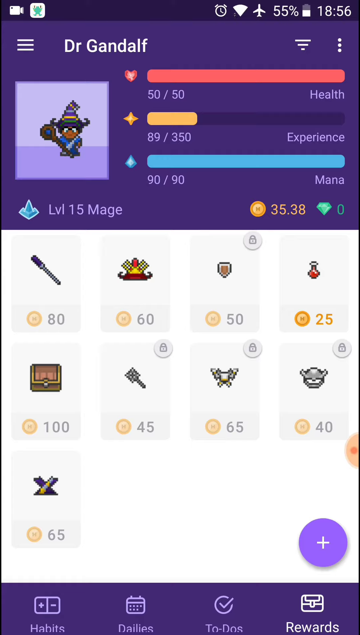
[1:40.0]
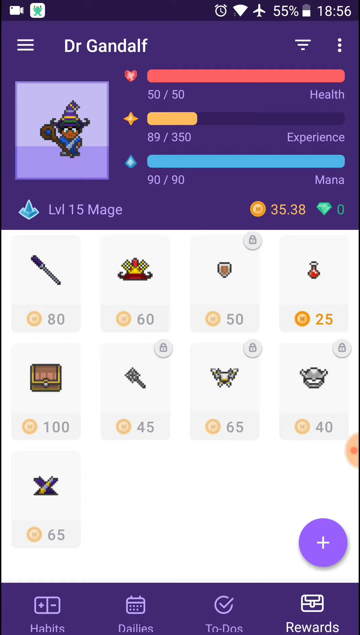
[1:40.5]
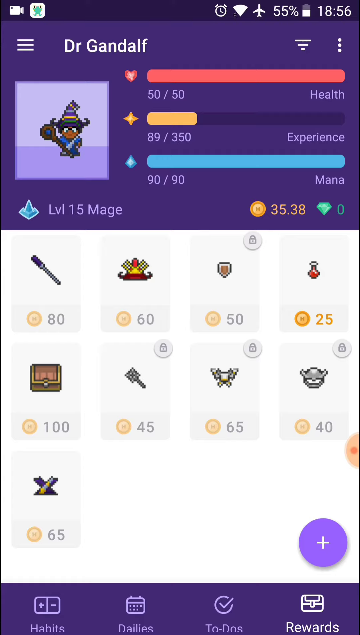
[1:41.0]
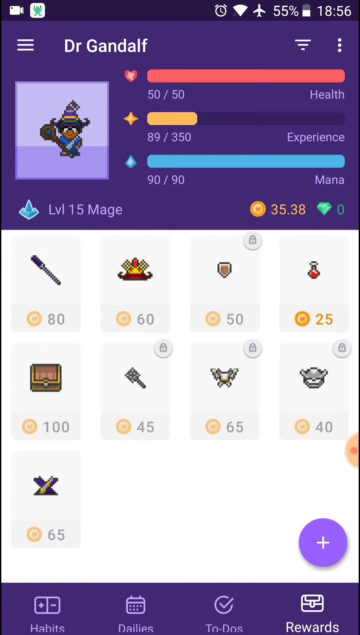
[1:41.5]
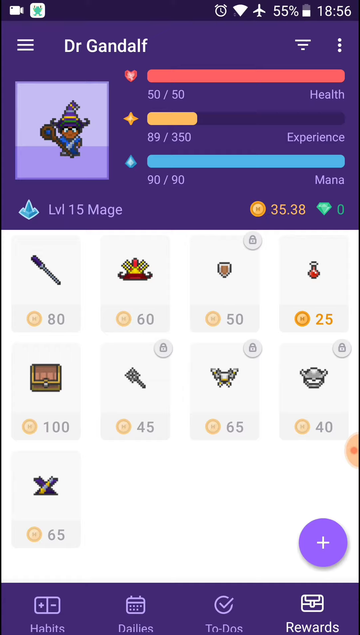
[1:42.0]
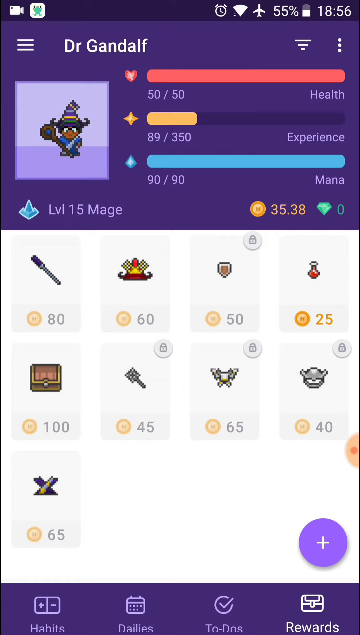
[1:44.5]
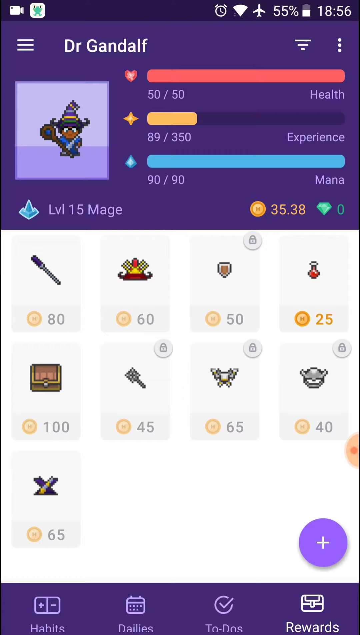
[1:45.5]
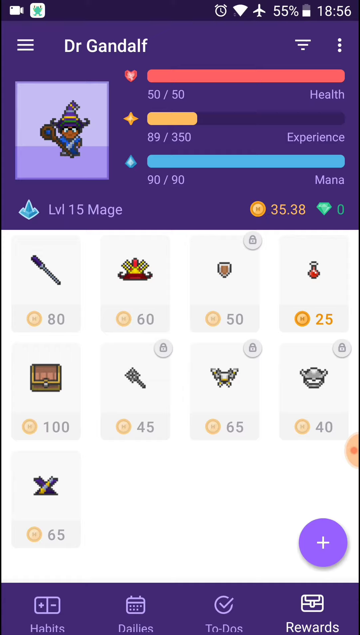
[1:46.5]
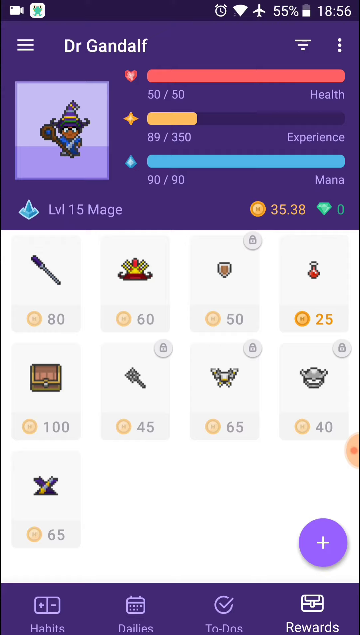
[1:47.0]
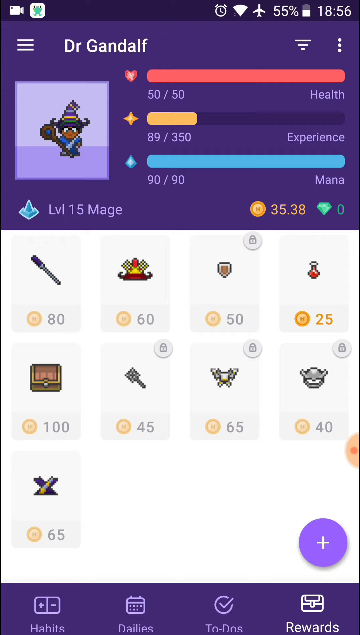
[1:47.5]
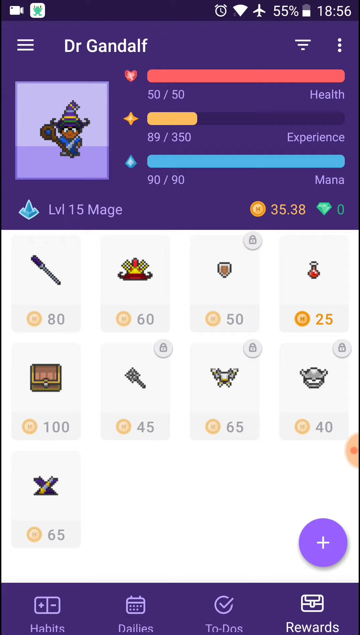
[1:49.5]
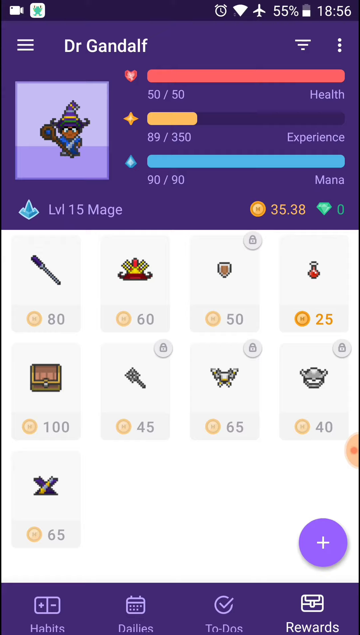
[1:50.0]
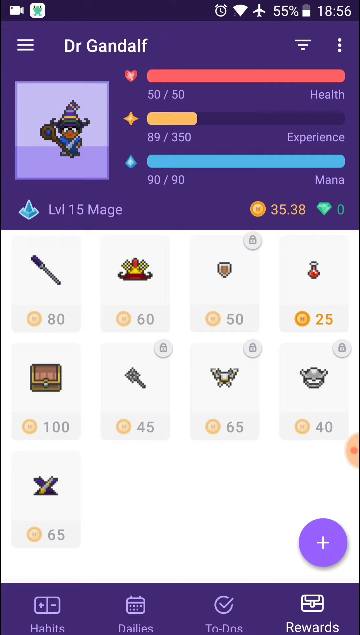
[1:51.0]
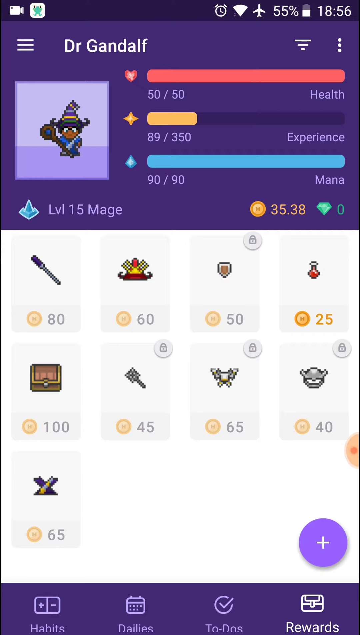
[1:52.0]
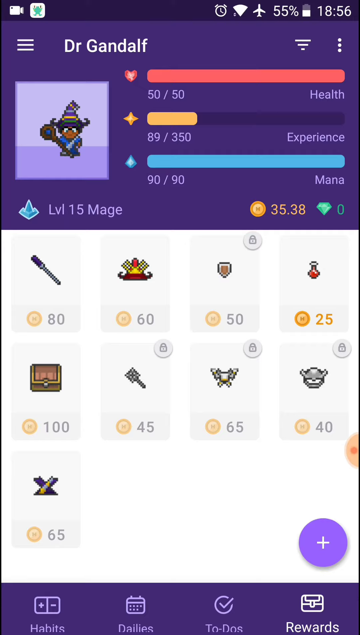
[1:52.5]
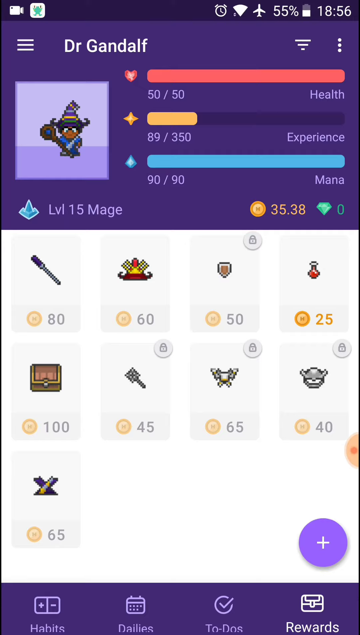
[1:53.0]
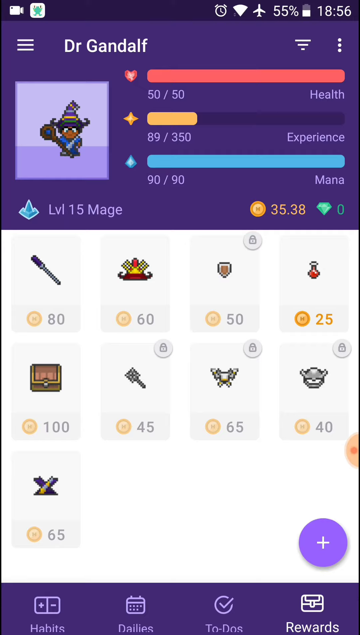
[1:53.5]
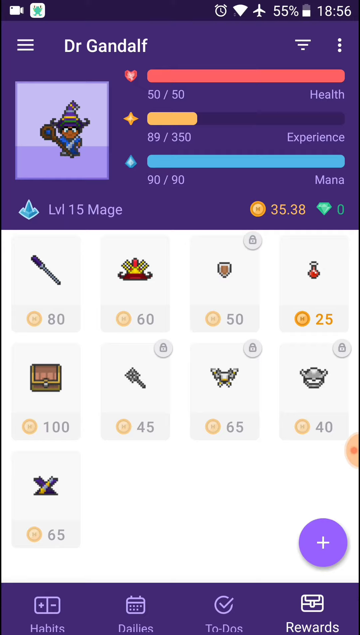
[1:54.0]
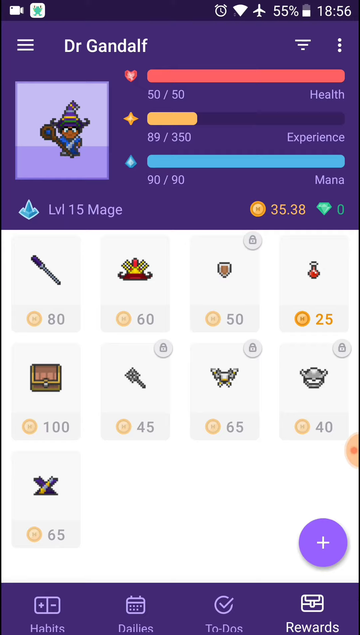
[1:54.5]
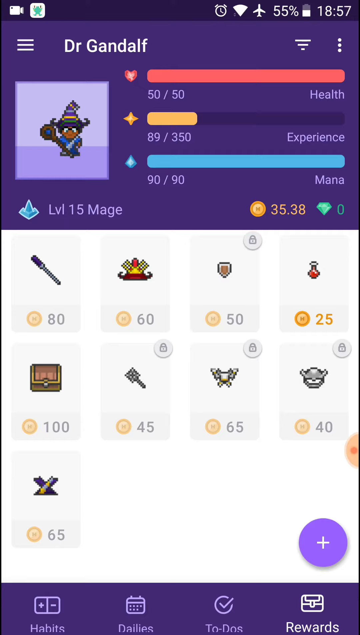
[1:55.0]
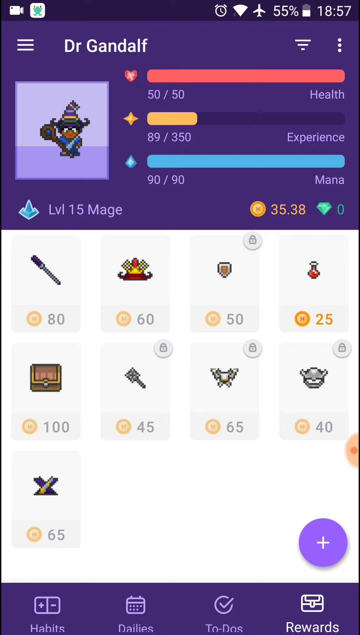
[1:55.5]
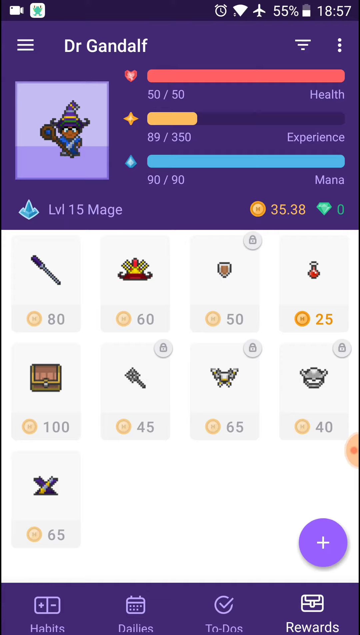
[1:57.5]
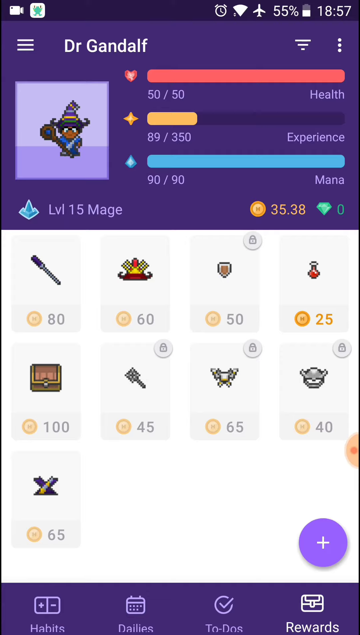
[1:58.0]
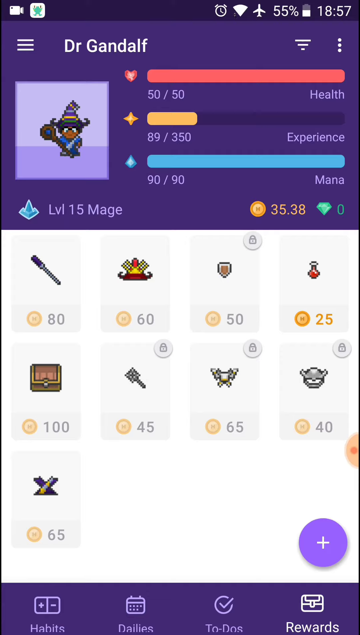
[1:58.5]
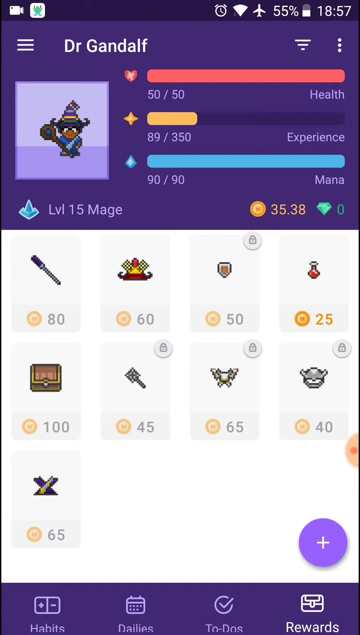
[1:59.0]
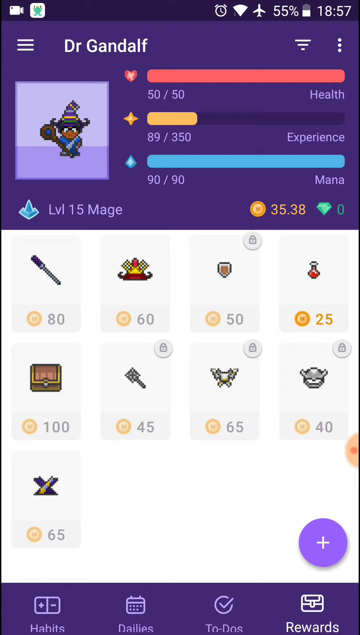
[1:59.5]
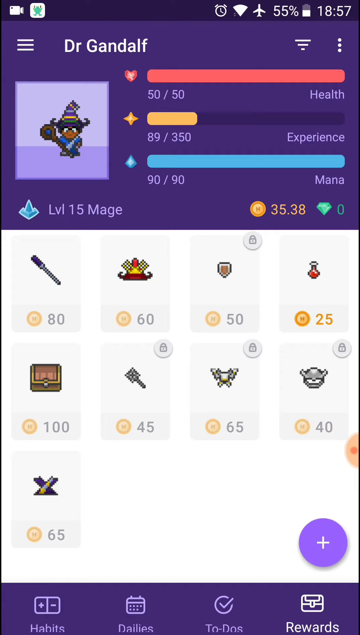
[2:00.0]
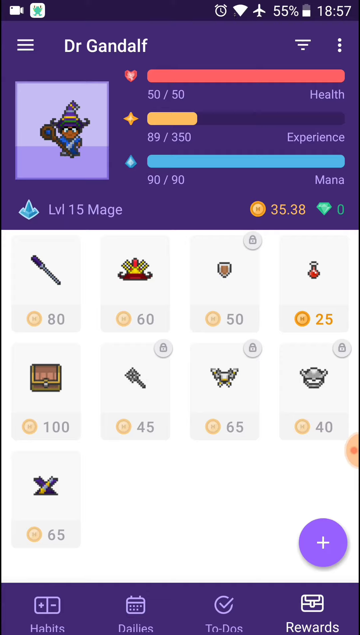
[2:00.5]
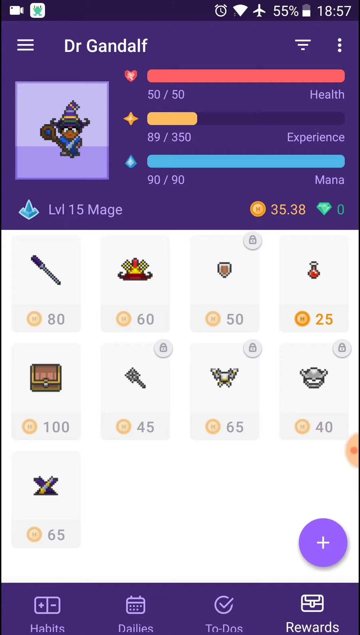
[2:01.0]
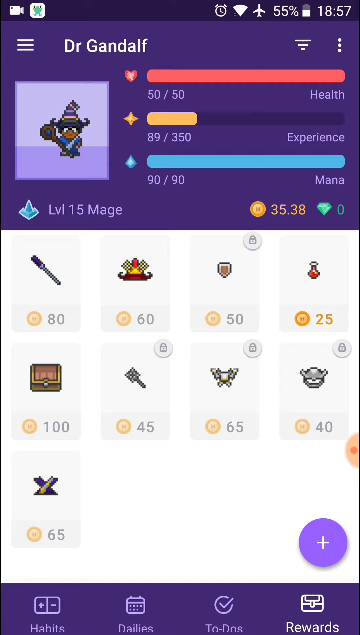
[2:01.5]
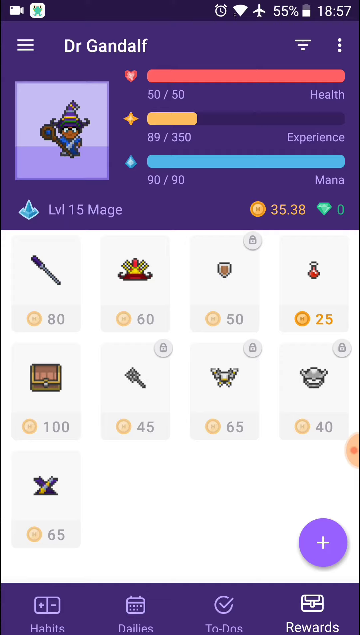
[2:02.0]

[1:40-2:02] The user remains idle on the page showing the character Dr. Gandalf and his stats. His health bar is full at 50 of 50, his experience is 89 out of 350, and his mana, his magical power, is also full at 90 of 90. In the top left corner is a picture of the wizard; his face cannot really be seen, but there is what looks like his eyes, white in color. He holds a staff, and underneath the picture he is shown at level 15. On the right side underneath the character stats, the player has zero diamonds and 35.38 gold coins. On the bottom half of the page are nine different accessories or weapons the user can purchase.